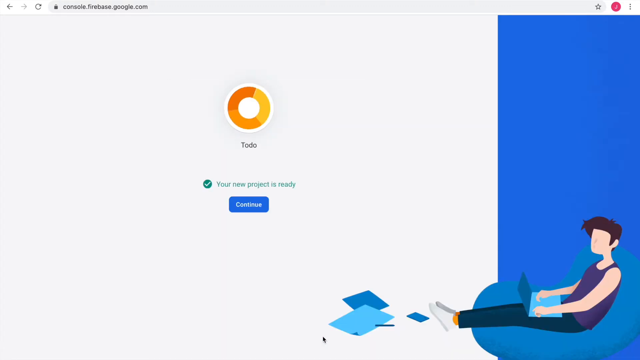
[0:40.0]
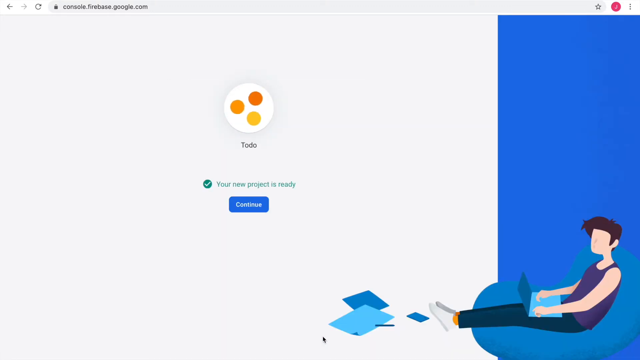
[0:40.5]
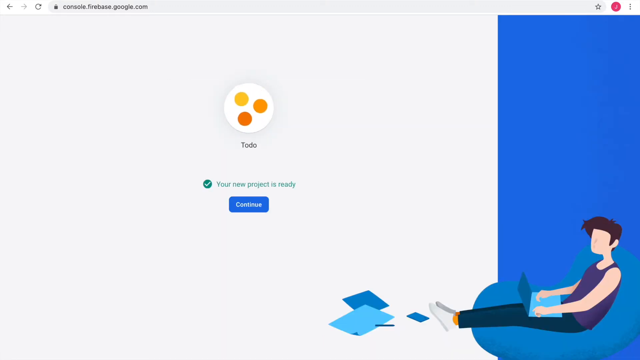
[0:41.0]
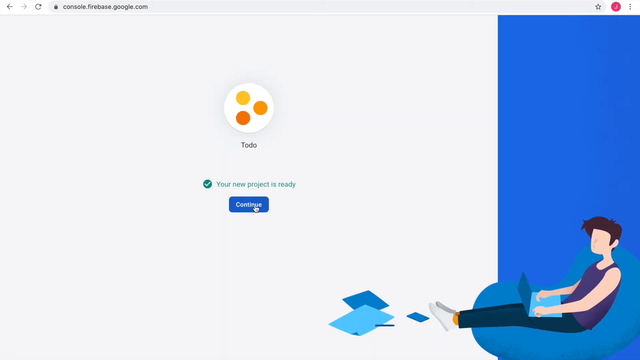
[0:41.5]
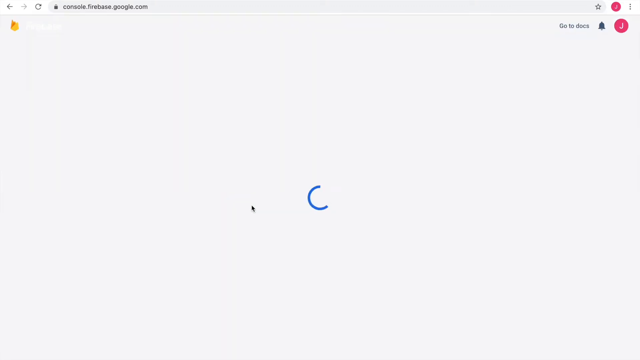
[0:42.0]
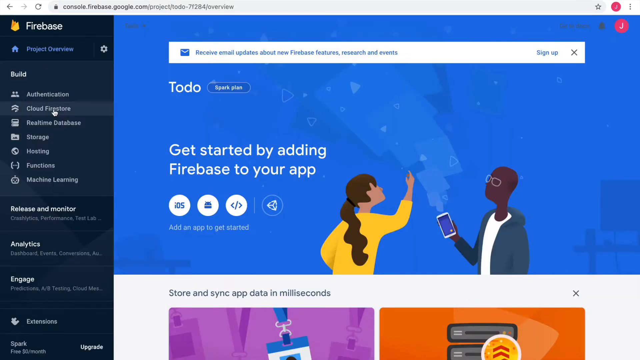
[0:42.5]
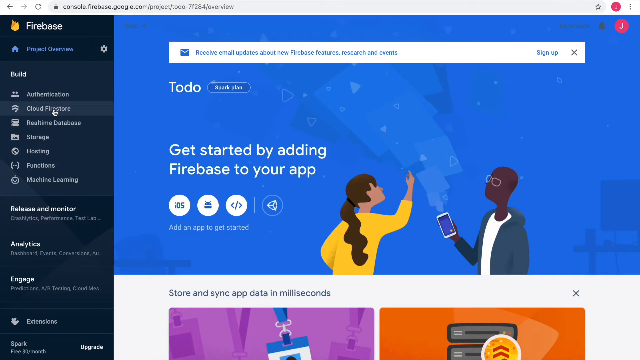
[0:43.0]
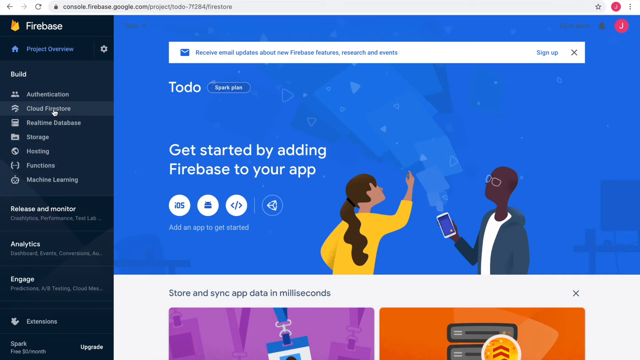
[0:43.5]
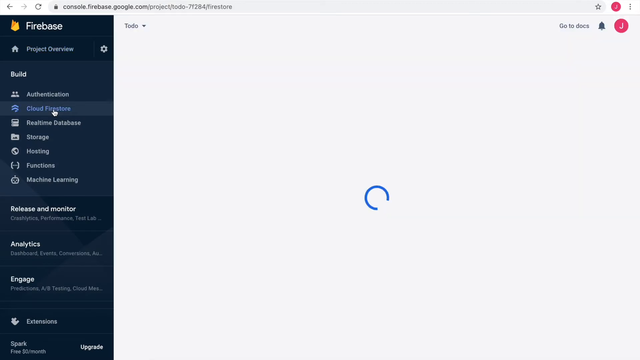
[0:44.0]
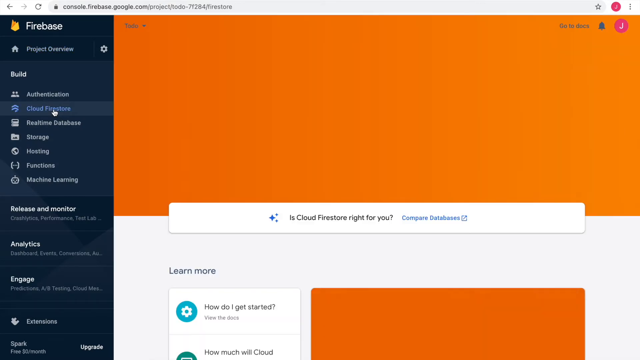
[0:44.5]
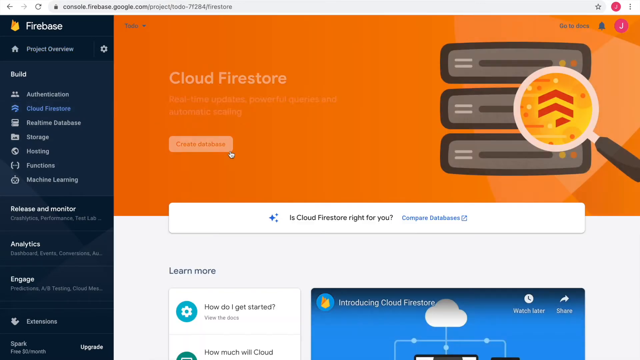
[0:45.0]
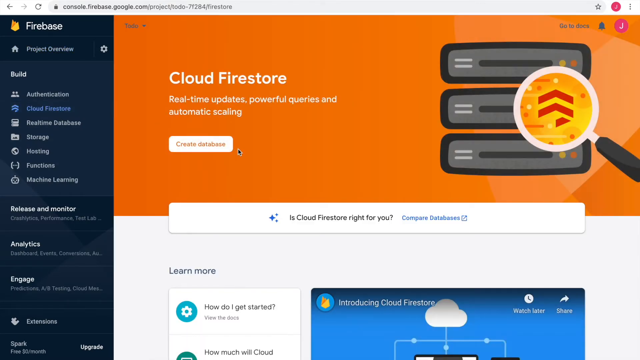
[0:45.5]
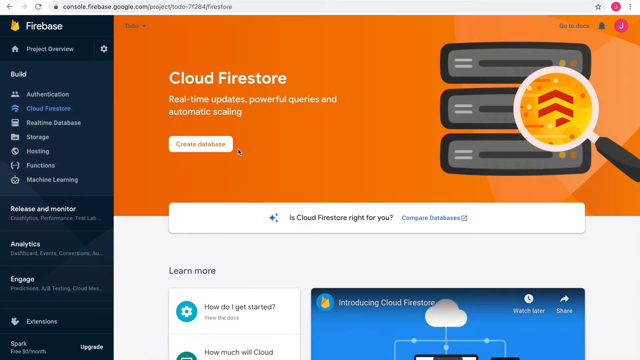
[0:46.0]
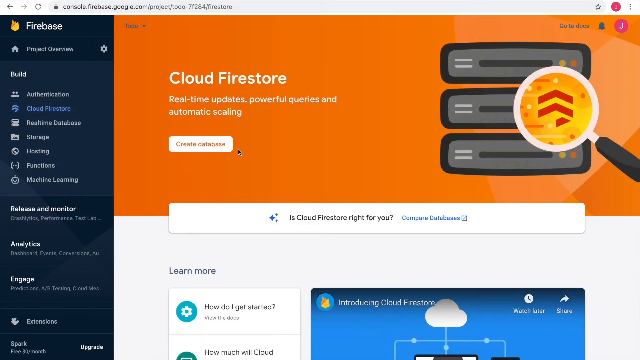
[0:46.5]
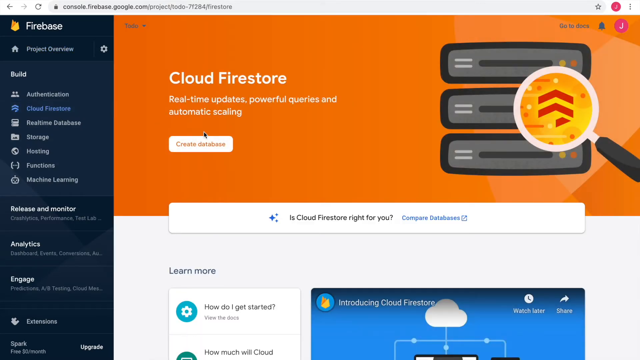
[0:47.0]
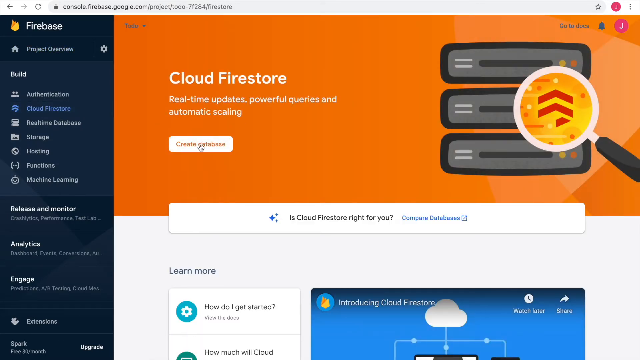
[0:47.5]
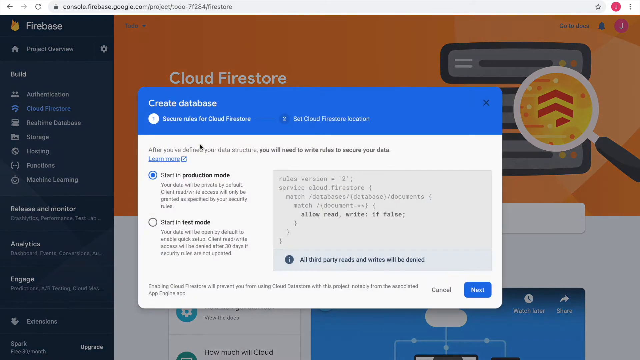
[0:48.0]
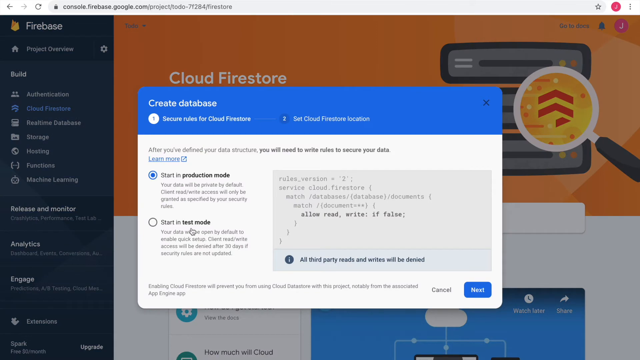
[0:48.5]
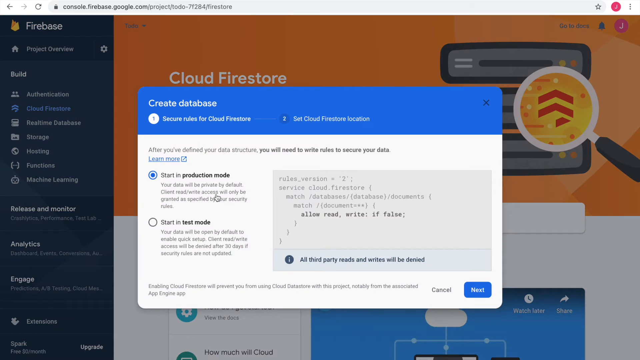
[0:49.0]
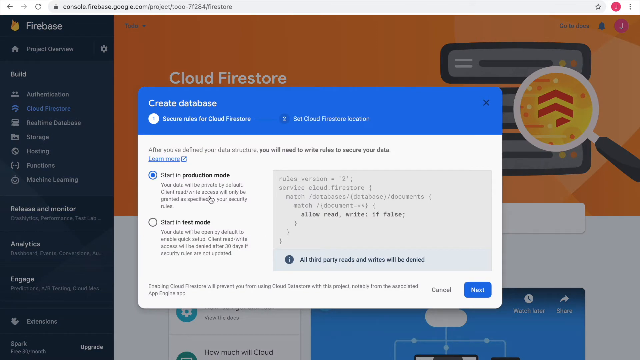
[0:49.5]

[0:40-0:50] At the center of the page, an initialization circle for the to-do list goes around as the page loads, with a blue continue button. An image at the bottom of the screen appears to show a woman sitting with her back against a wall, a laptop computer in her lap, white shoes, her legs stretched out, and some paper scattered around. He clicks continue and is back on the Firebase page, where there is a sign-in button. He then goes over to Cloud Firestore, which shows how to create a database in a blue tab with options for production mode or test mode.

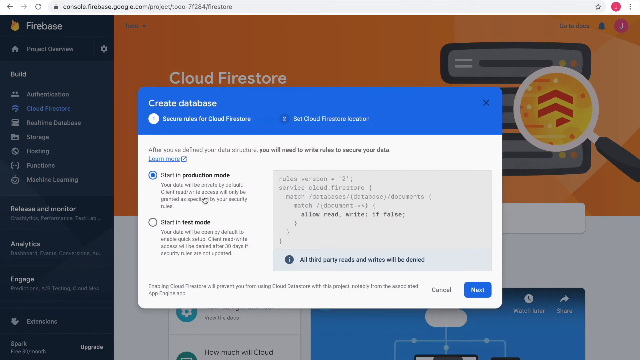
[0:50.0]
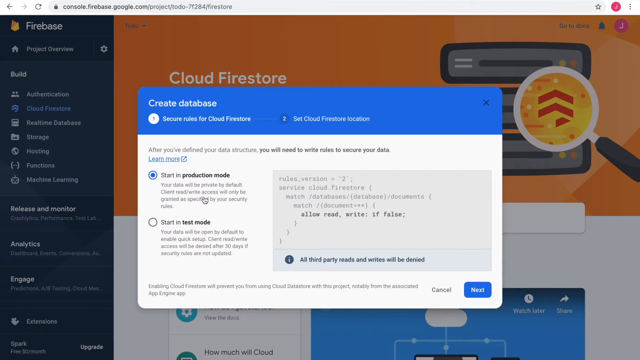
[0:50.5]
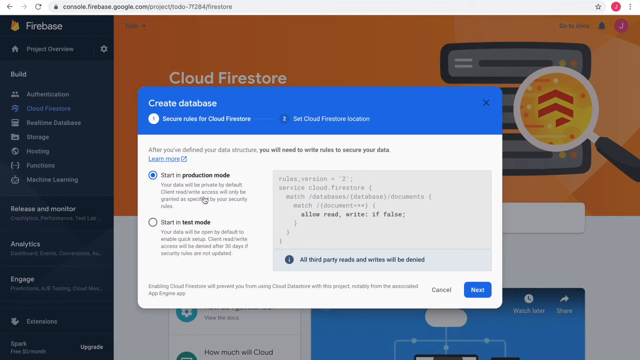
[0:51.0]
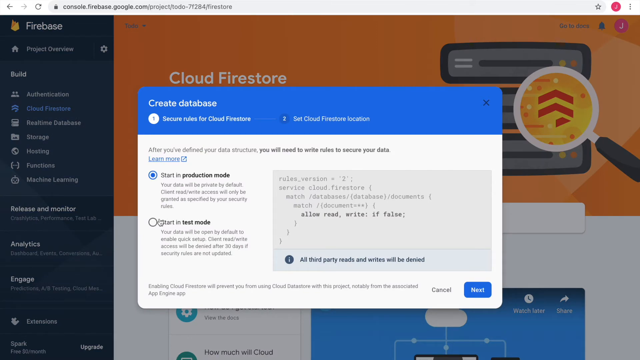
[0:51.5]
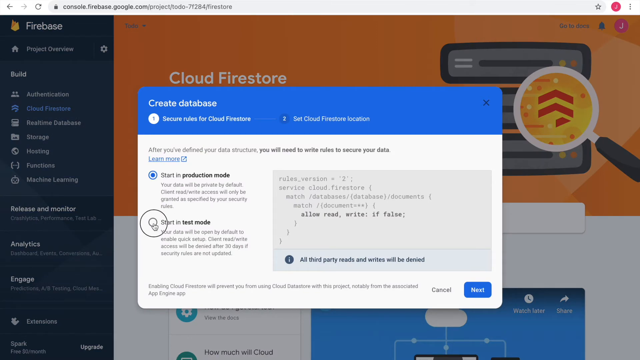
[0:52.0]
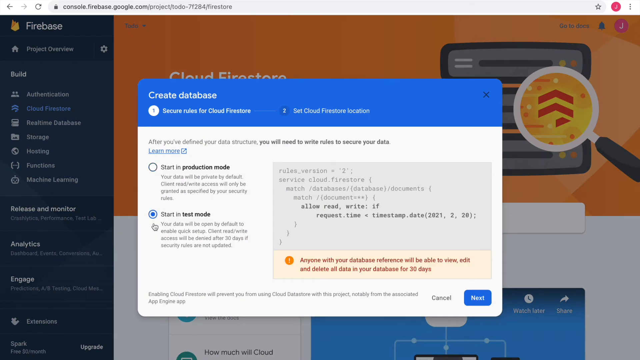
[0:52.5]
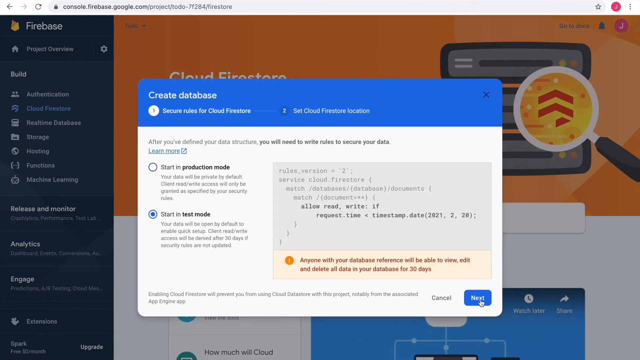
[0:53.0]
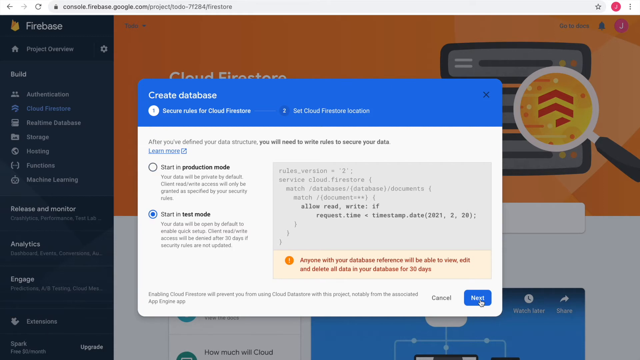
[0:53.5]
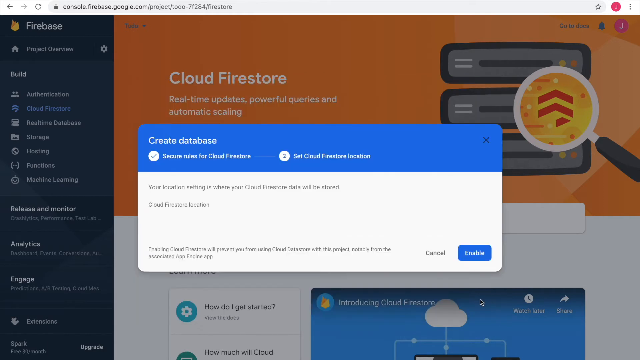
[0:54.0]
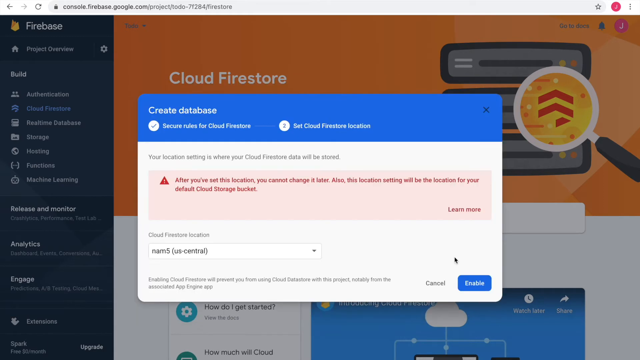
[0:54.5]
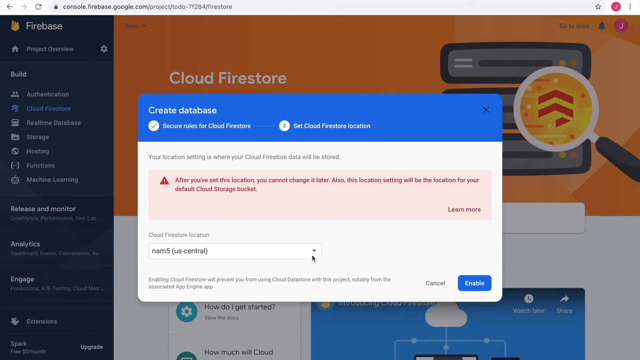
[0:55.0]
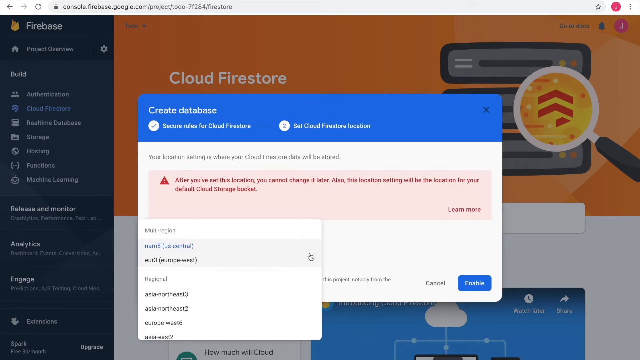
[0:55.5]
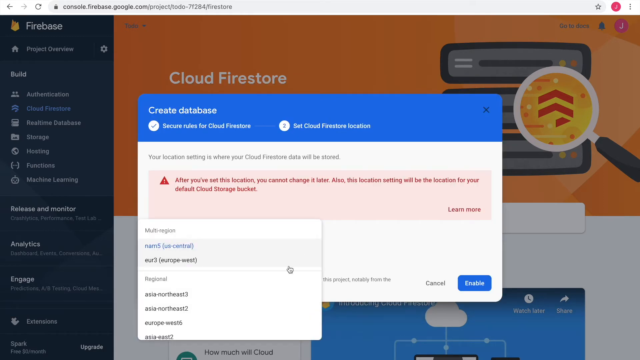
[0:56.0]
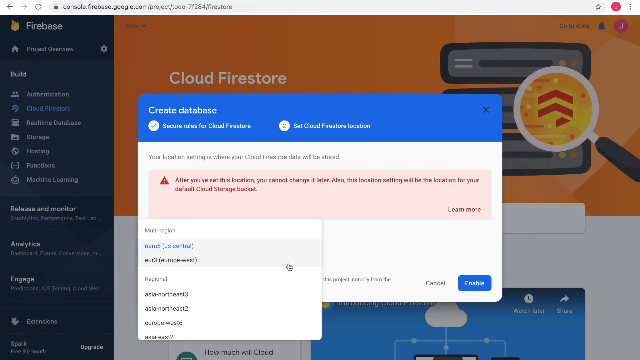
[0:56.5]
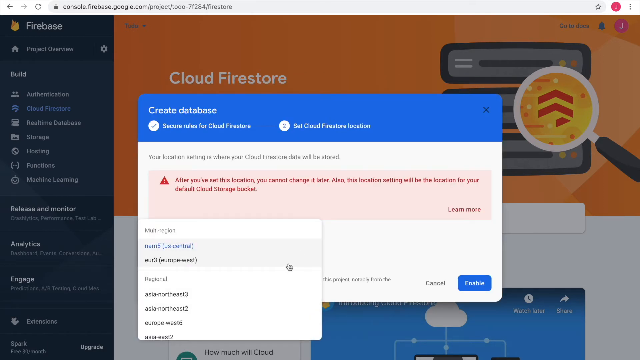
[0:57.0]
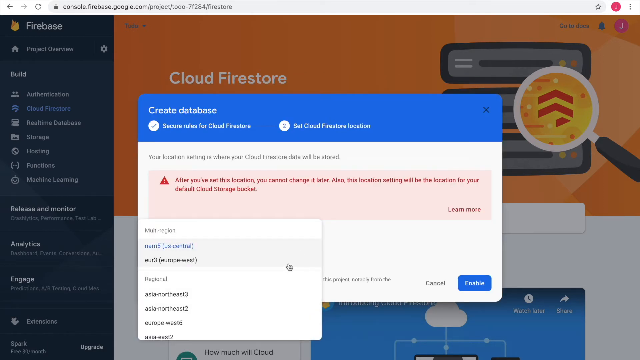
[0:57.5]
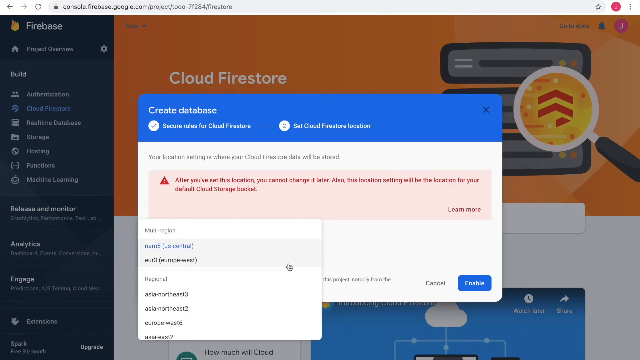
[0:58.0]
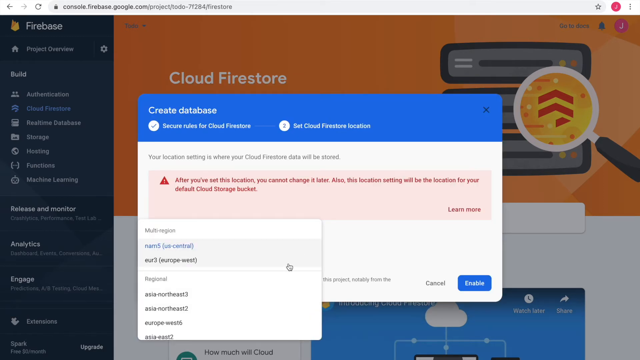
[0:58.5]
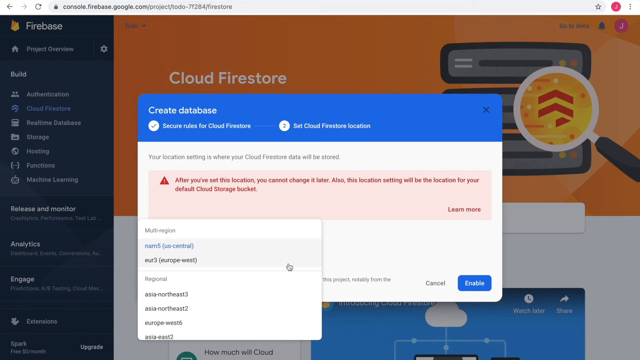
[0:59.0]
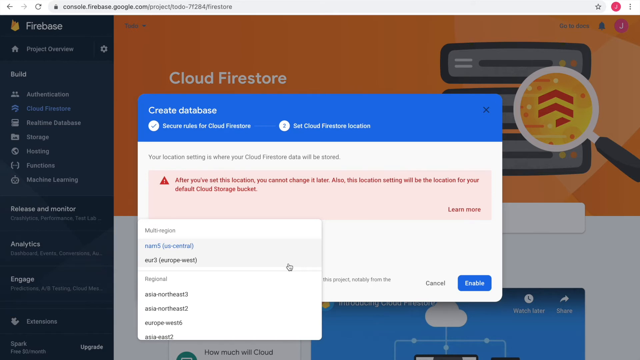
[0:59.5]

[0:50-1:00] In Cloud Firestore, the section for creating a database is shown, including the test mode option. He moves the cursor and goes through the steps of creating a database in Firestore. The backdrop is the Firestore page with orange and a magnifying glass with arrows. Off to the left is a menu with a project overview, build and store options, and other functions.